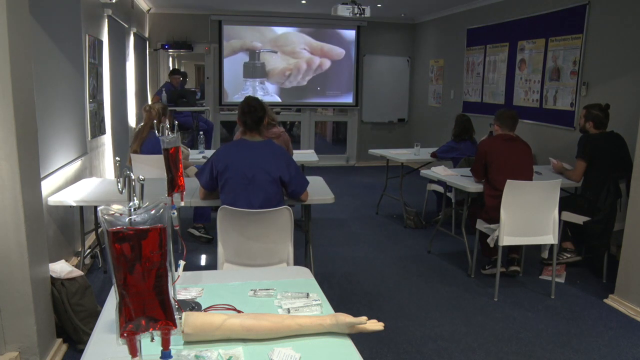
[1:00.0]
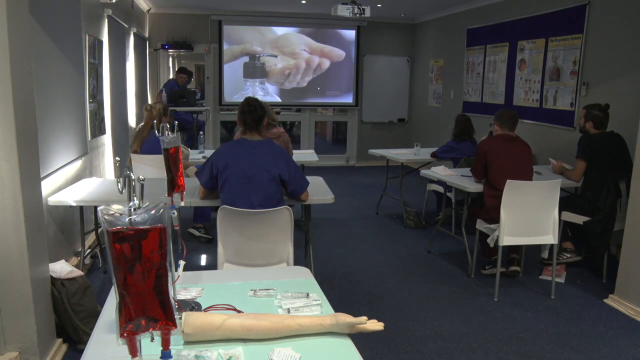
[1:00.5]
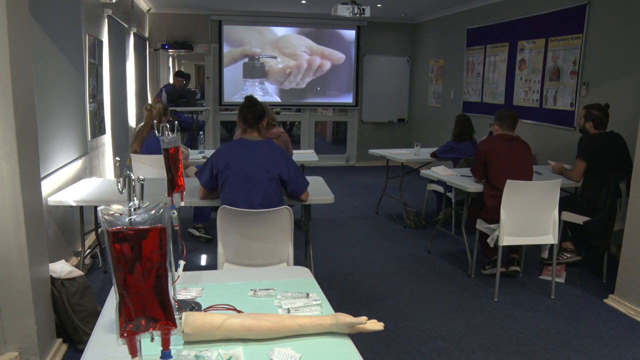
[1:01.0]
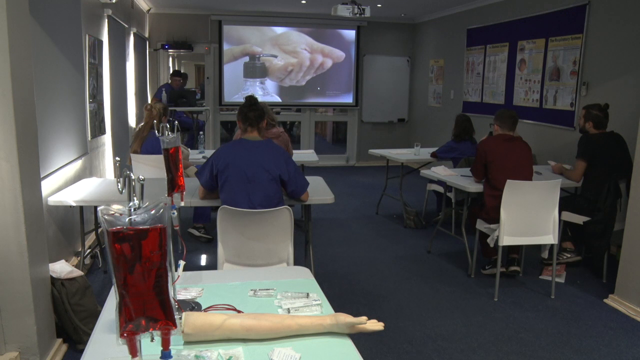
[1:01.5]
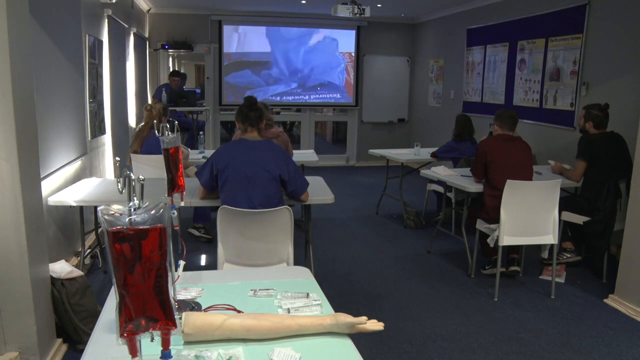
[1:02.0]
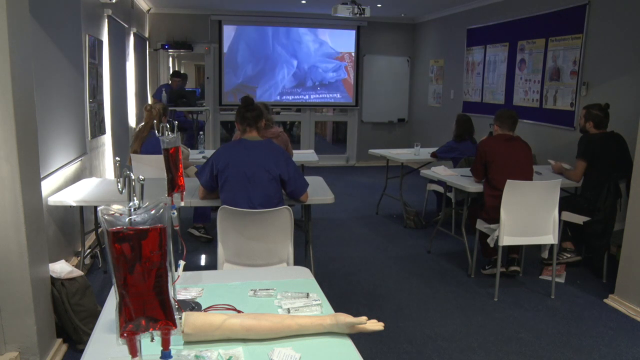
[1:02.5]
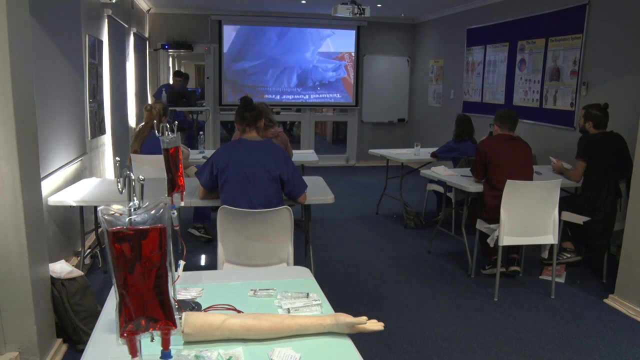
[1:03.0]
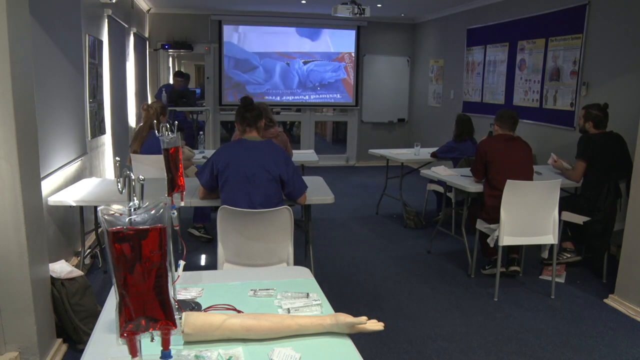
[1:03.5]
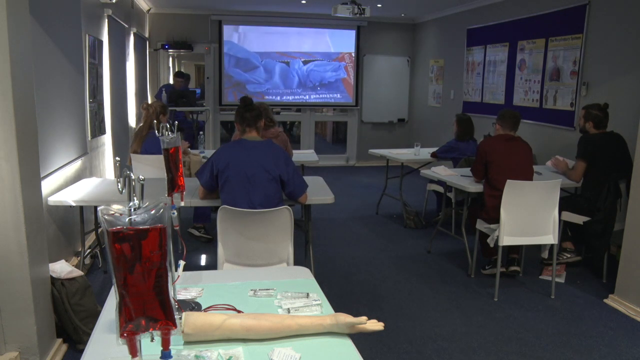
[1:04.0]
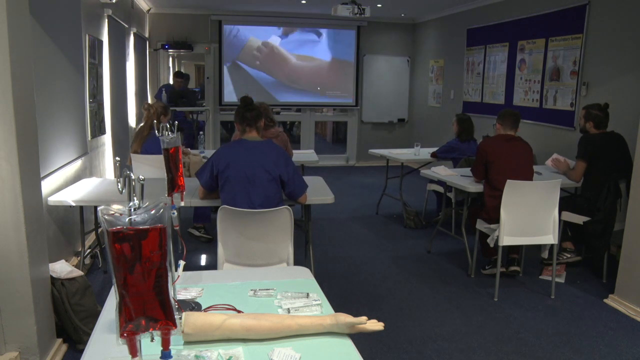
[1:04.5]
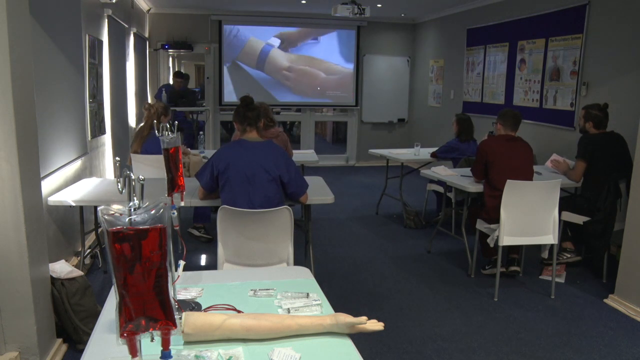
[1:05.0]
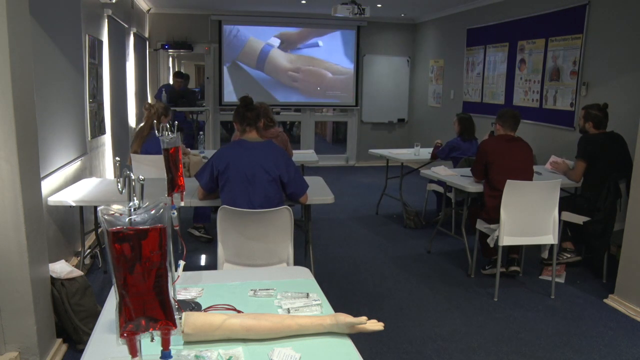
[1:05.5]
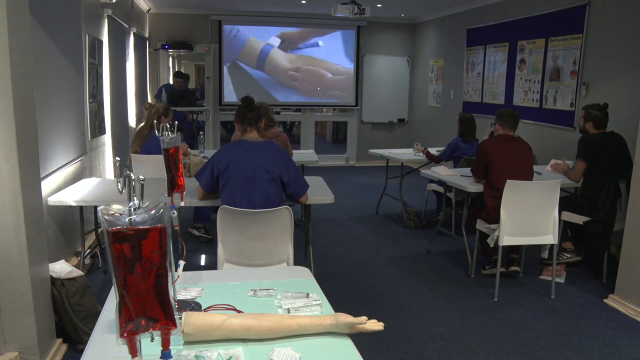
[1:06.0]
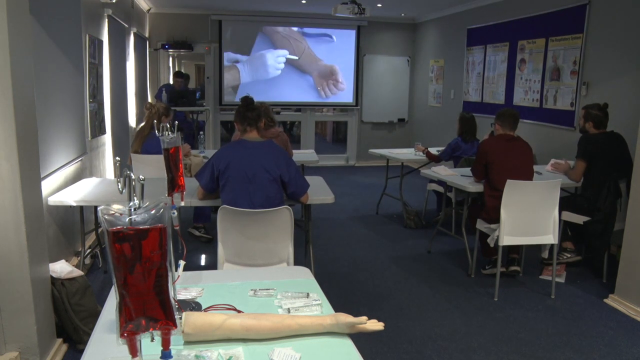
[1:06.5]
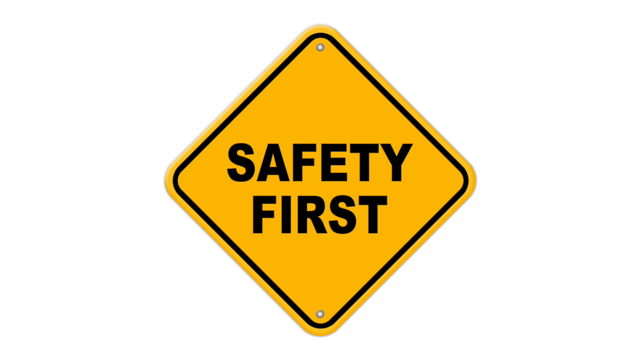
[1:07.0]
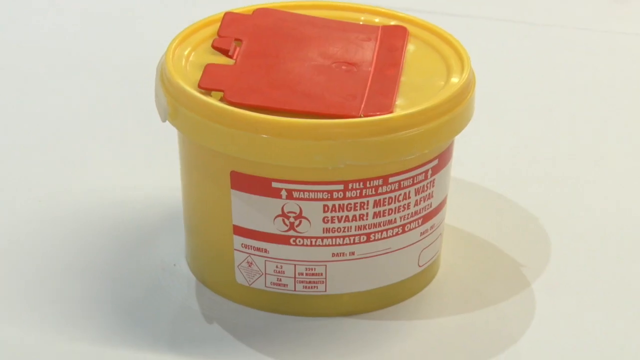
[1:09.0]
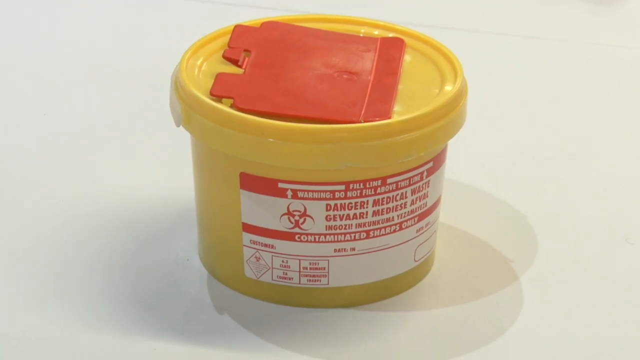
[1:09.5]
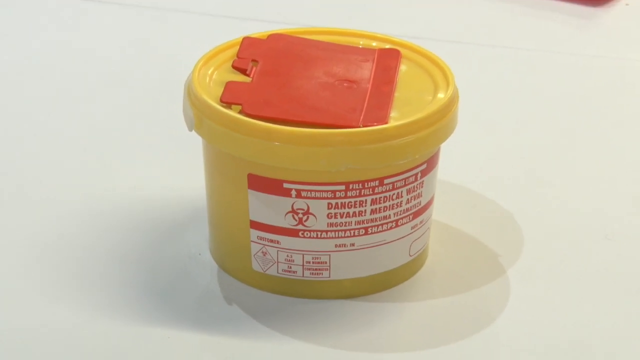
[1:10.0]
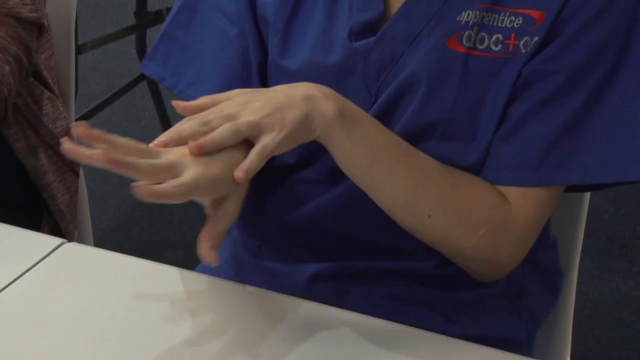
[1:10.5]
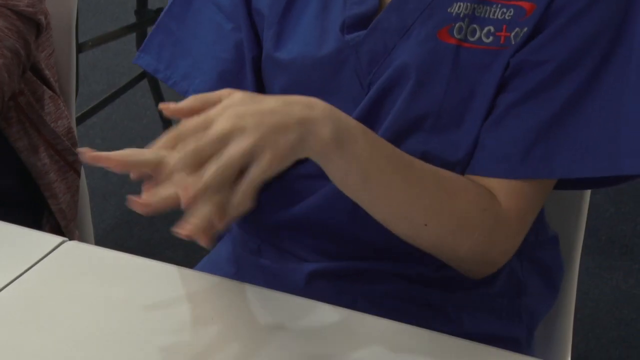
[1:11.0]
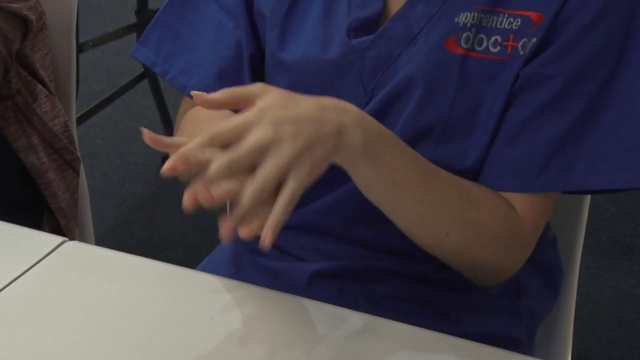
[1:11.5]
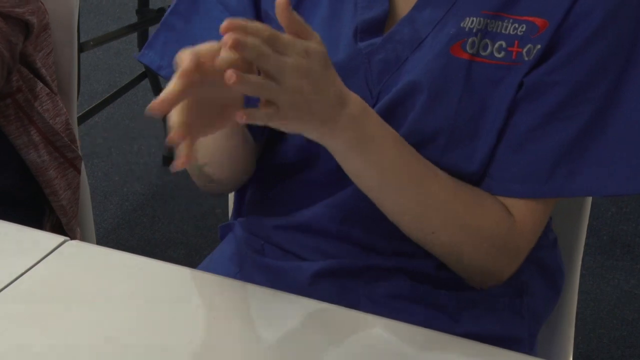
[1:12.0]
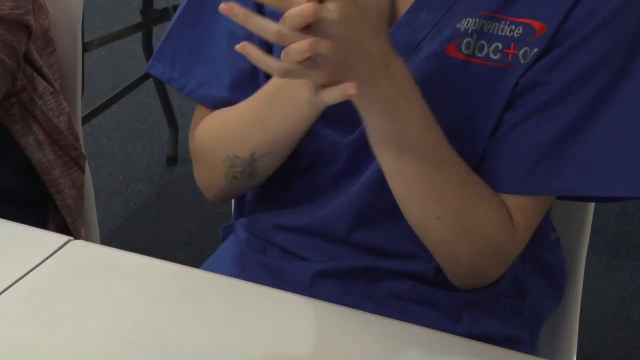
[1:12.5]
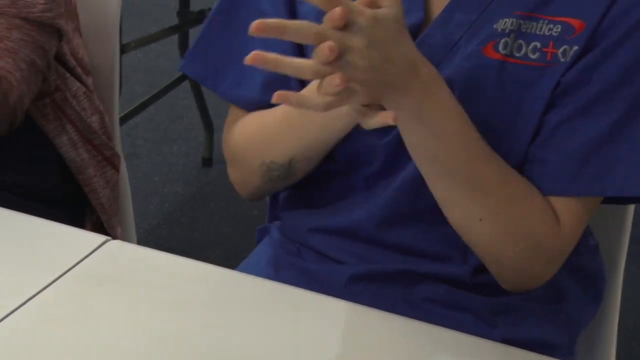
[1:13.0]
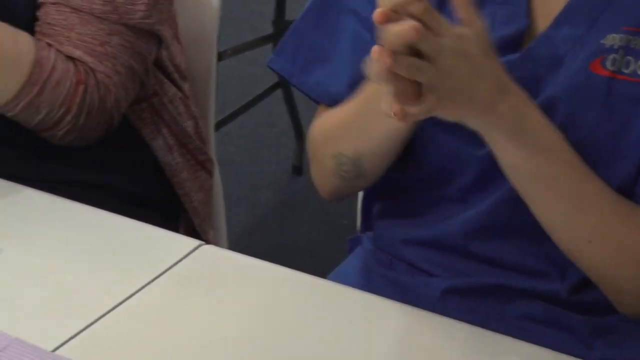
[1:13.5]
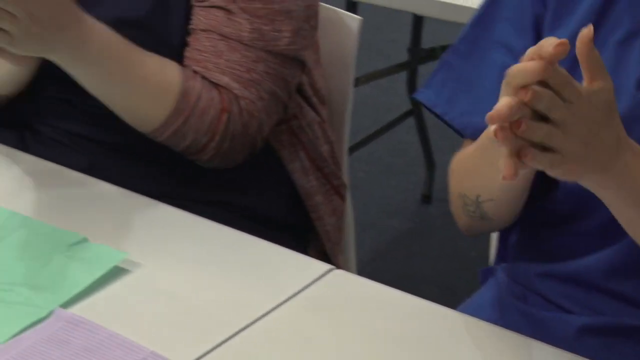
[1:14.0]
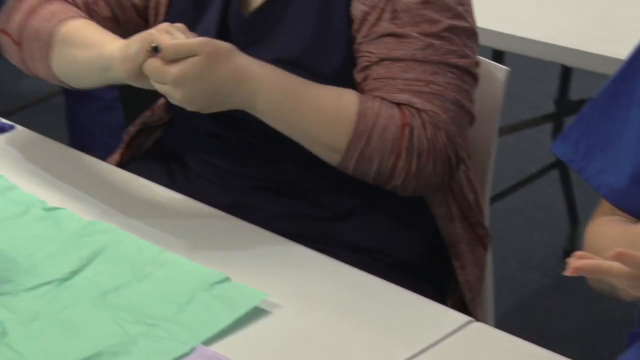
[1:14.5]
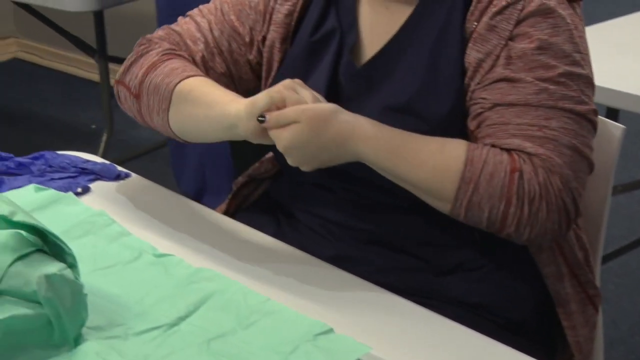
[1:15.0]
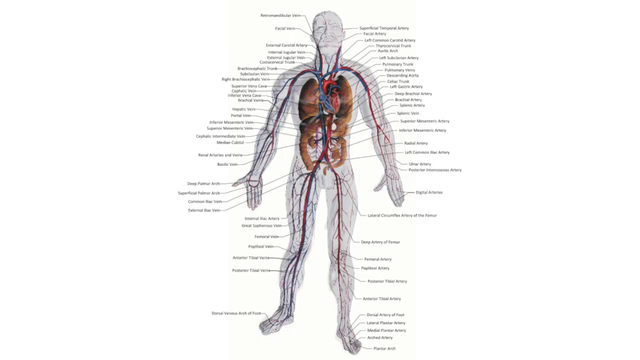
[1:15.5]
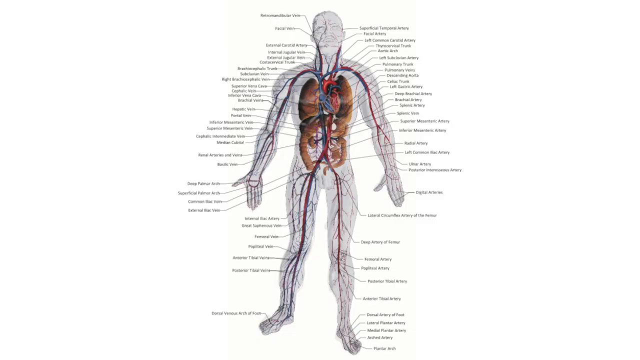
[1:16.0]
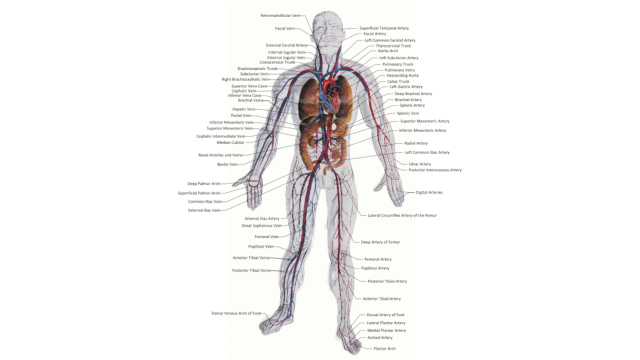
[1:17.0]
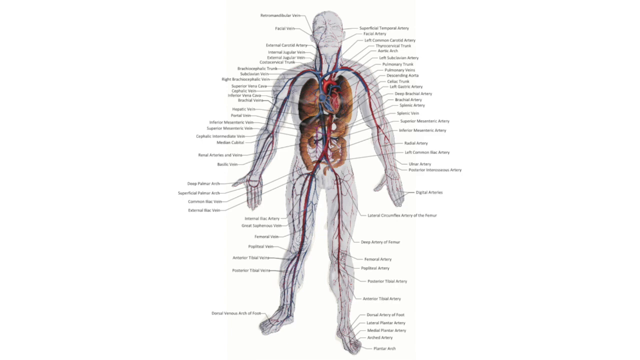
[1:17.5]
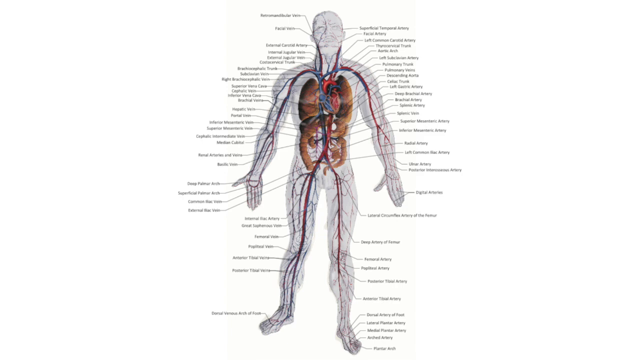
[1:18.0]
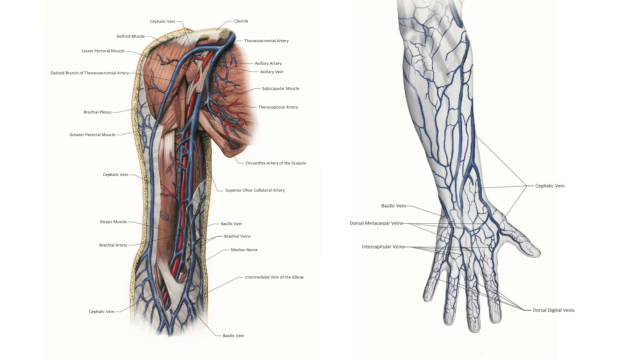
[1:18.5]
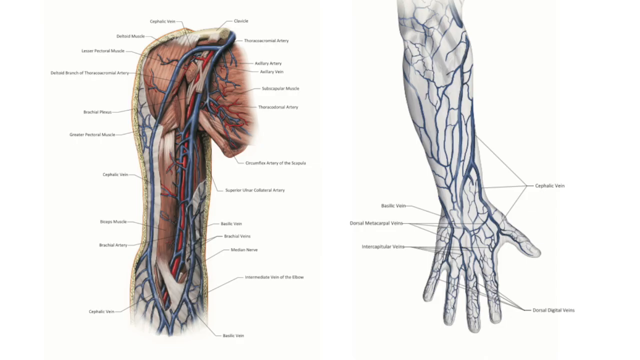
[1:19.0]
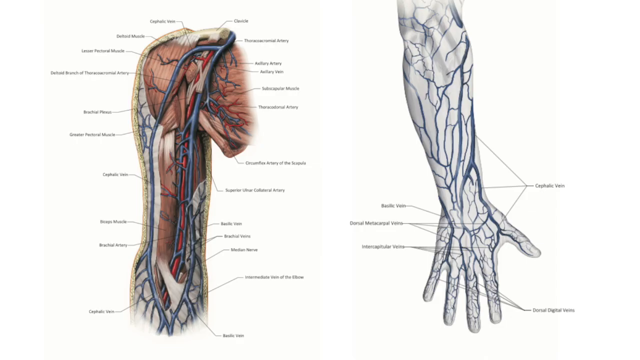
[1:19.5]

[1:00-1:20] A small classroom holds about six or seven students and an instructor sitting at the front. A video plays on a large projector screen: someone pumps hand sanitizer or soap into their hand, then takes a pair of blue latex gloves out of a little box, ties a large blue rubber band around a patient's arm, and draws a mark where they are going to give an injection or draw blood. The scene changes to a white background with a diamond-shaped safety sign reading "safety first" in big bold black letters. Next is a small circular yellow container with a label on the front bearing a danger icon like a biohazard icon and, in big red letters, "danger medical waste", with some kind of red square plastic tab on top. In a close-up, a woman wearing blue hospital scrubs with "apprentice doctor" on the chest washes her hands, first with both hands roughly palms down, one over the other, rubbing the fingers and knuckle area, then with her palms together, rubbing them with her fingers bent and clasped. The camera moves over to another woman next to her, wearing a black shirt with a brown cardigan, who also scrubs her hands with both hands sort of in fists, fingers clasped, making a rubbing motion. Next is what looks like a diagram of a man's body showing all of the organs and blood vessels inside, with lines labeling every part of the body. Then comes a close-up image of what appears to be the shoulder and bicep area, showing the muscles and veins inside with the different parts labeled, and next to it a close-up of what looks like the elbow down to the fingertips, mostly white with labeled blue veins running through the arm.